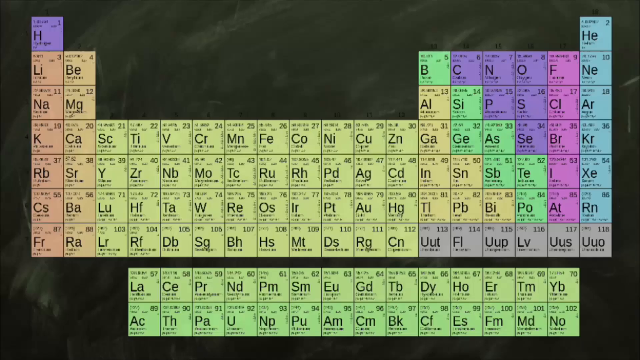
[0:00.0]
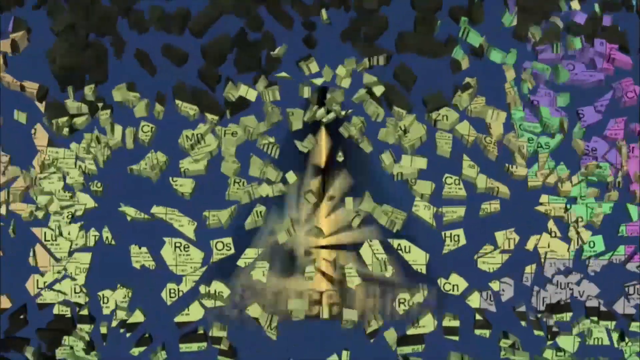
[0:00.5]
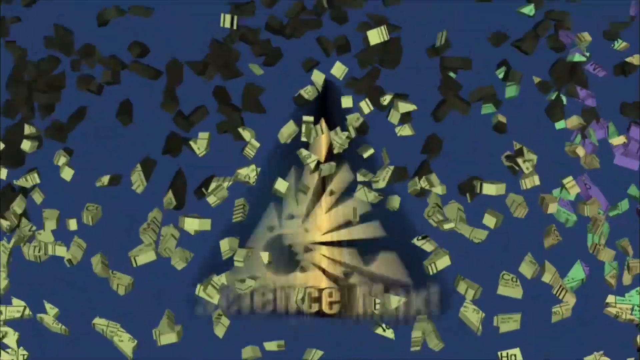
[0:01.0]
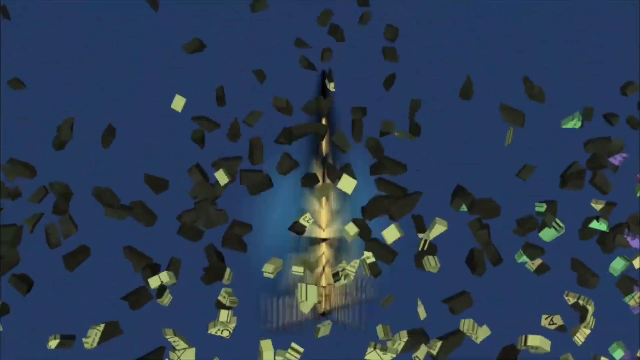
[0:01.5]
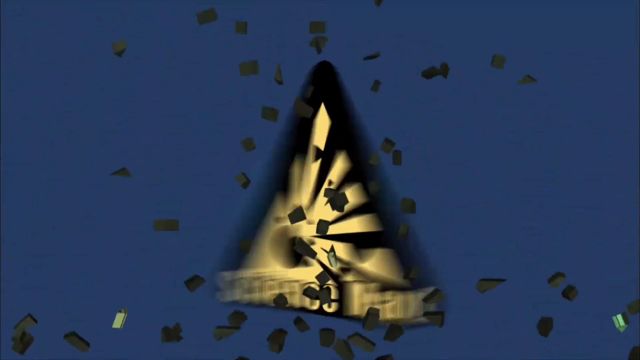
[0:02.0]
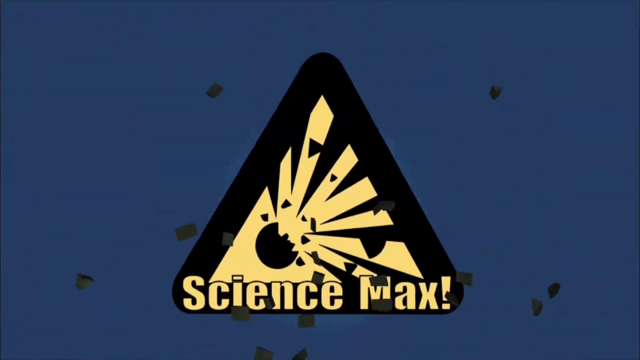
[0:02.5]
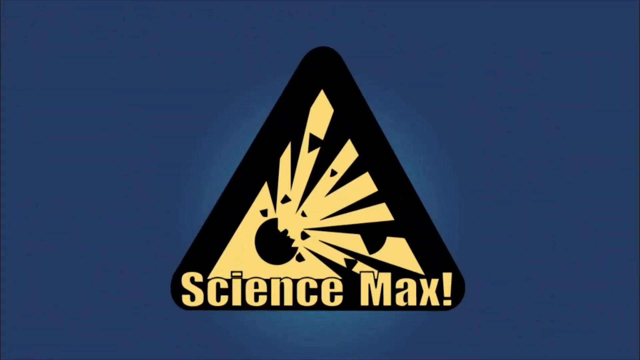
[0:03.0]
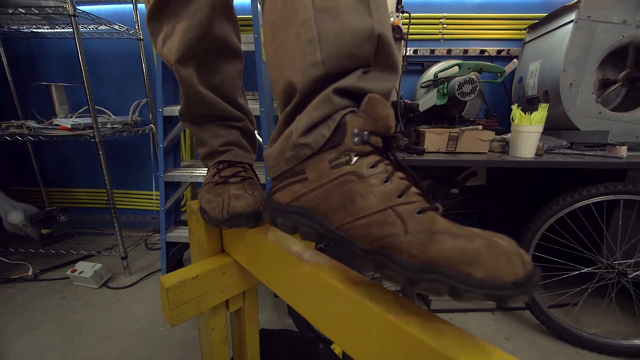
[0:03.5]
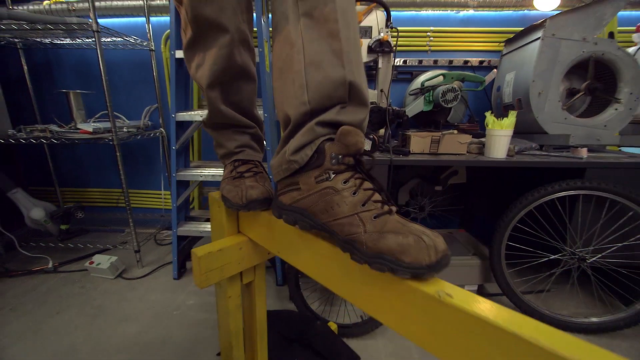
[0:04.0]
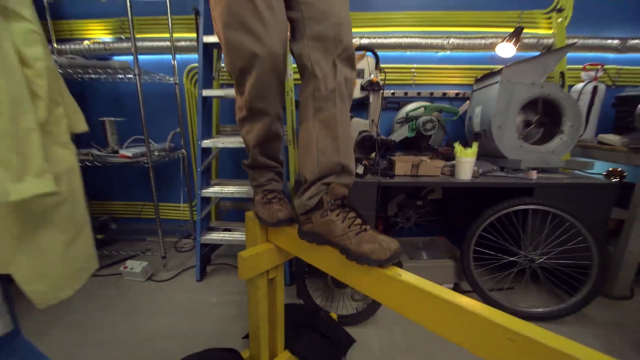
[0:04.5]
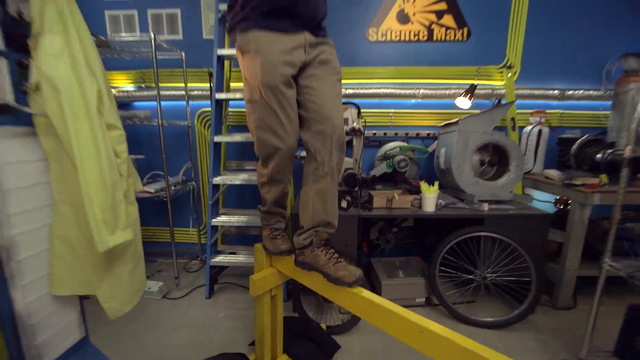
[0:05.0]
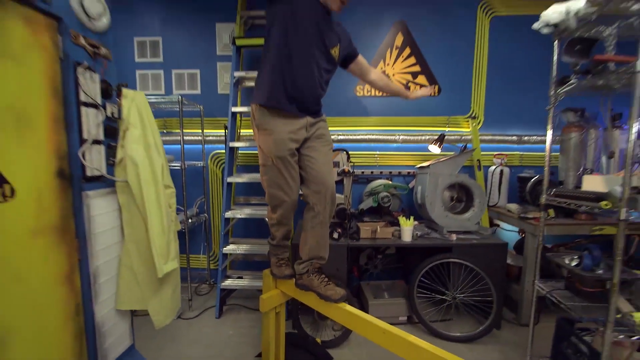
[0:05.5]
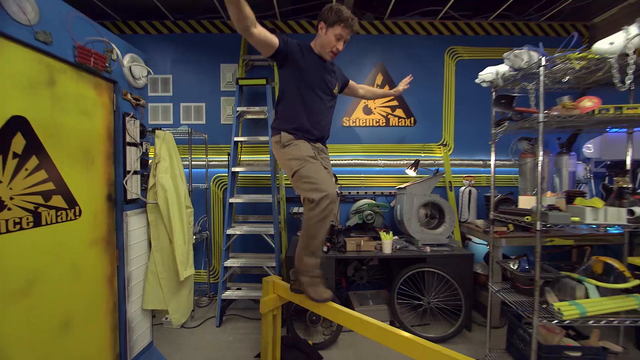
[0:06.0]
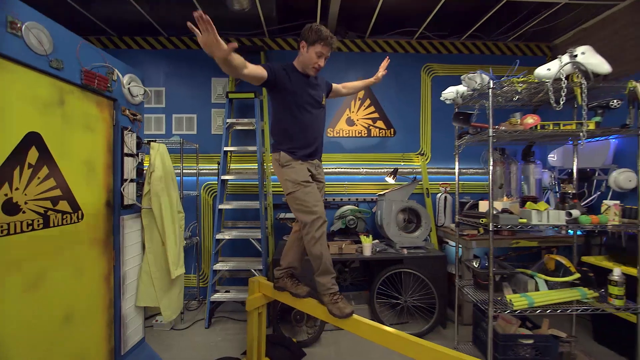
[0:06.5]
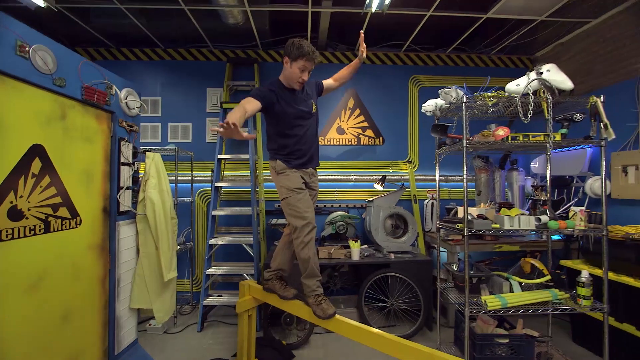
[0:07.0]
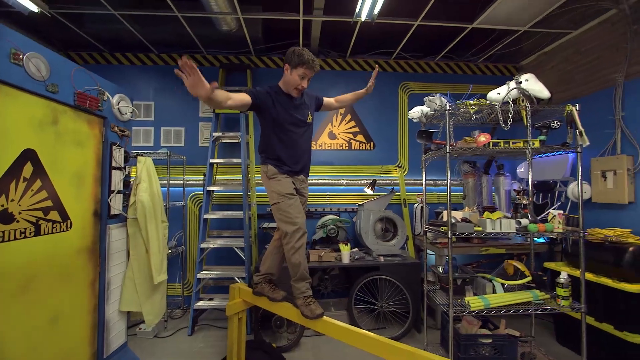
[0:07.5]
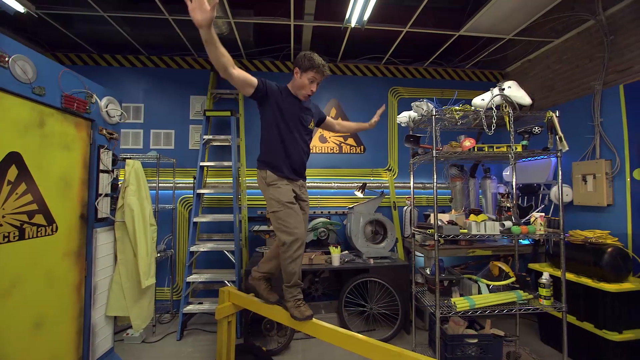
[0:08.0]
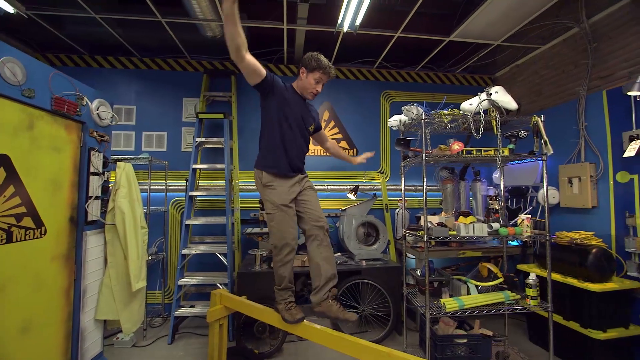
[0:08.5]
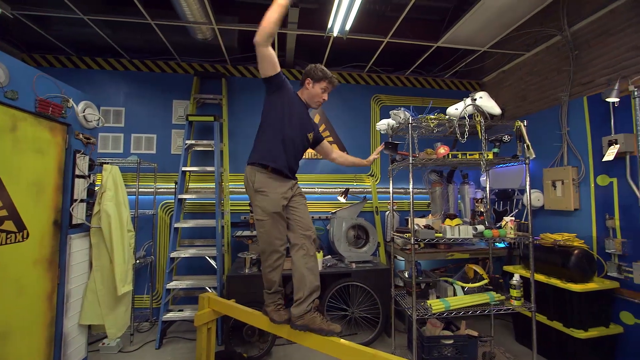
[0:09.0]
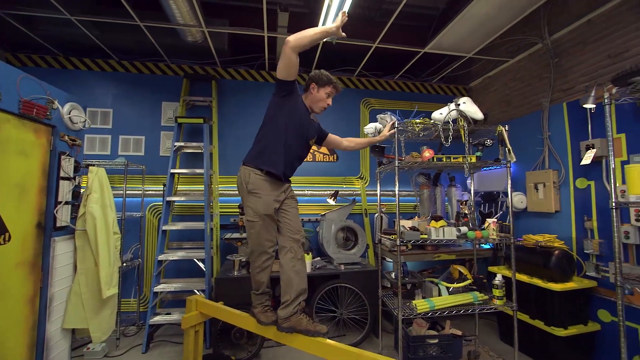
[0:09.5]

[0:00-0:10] A periodic table of elements appears against a black background. The image shatters and crumbles toward the bottom of the frame, and in its place is a spinning triangle shape, the logo for Science Max. The logo is black and yellow, set against a blue background, with the text "Science Max" in yellow at the bottom of it. The video then switches to a man walking on a yellow bar. He wears brown shoes, brown pants and a dark blue shirt, and has his arms spread out at his sides, bouncing as he walks. The man speaks and almost falls over slightly to the left, but catches himself by leaning slightly onto a metallic shelf on the right side of the frame.